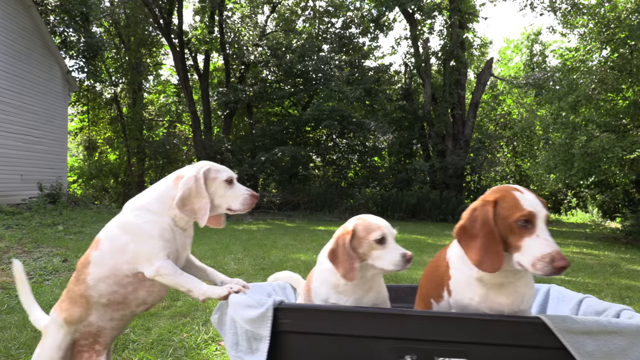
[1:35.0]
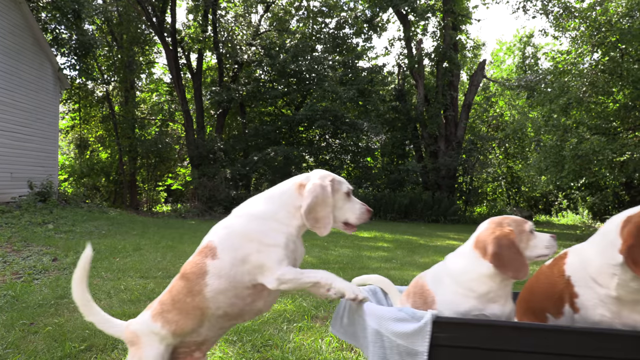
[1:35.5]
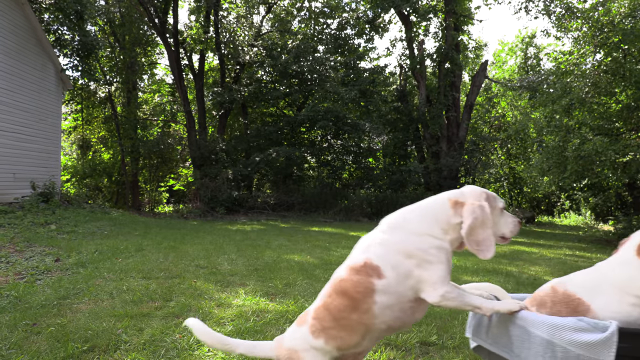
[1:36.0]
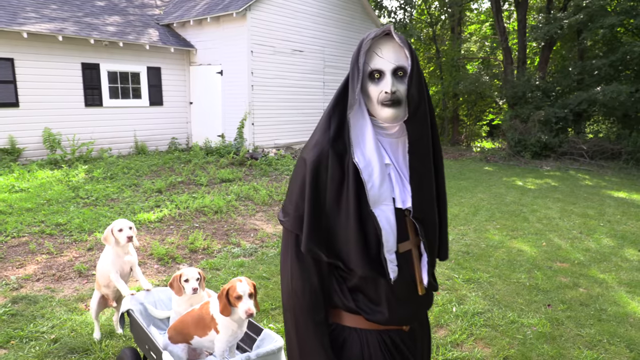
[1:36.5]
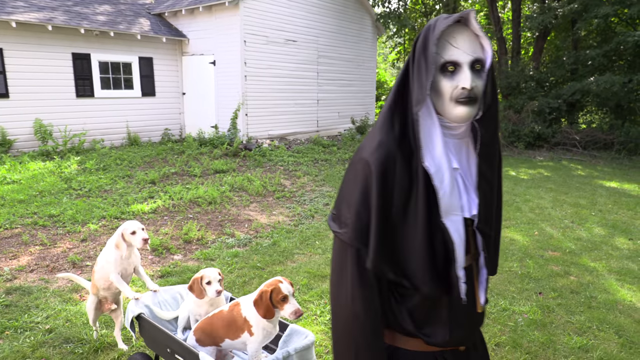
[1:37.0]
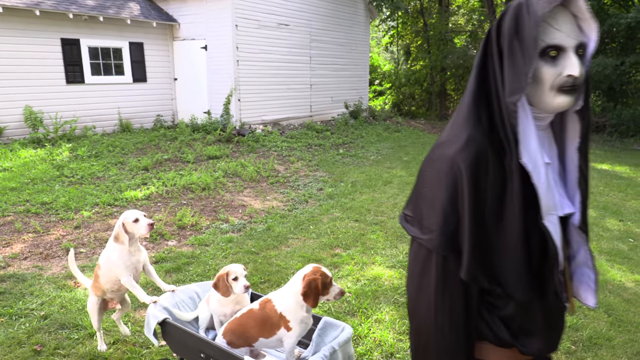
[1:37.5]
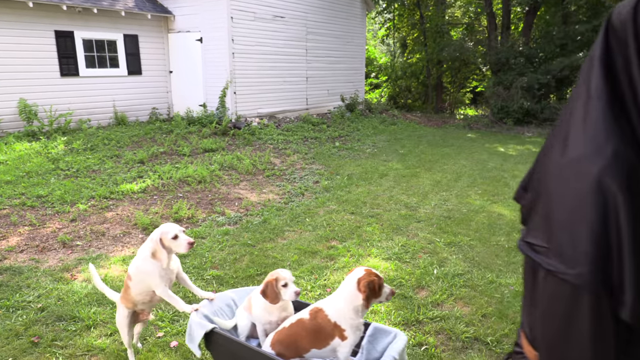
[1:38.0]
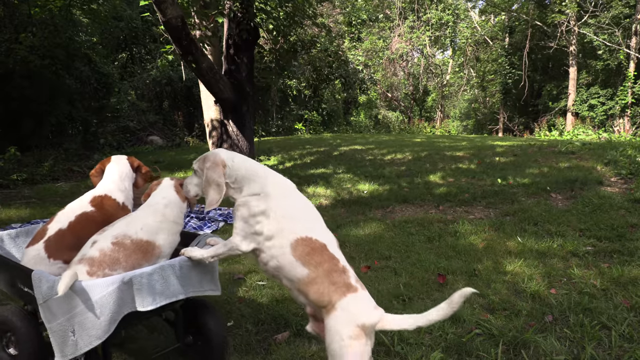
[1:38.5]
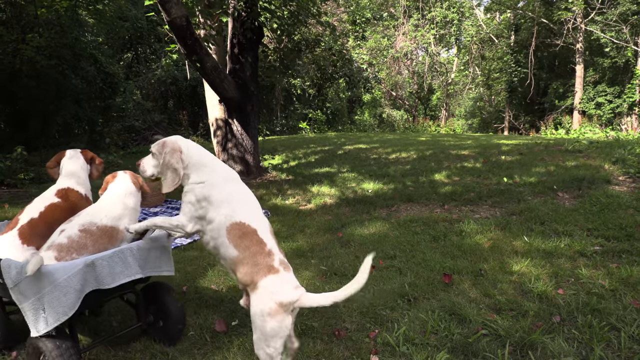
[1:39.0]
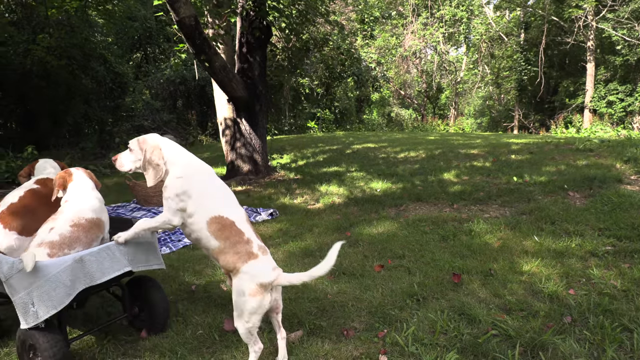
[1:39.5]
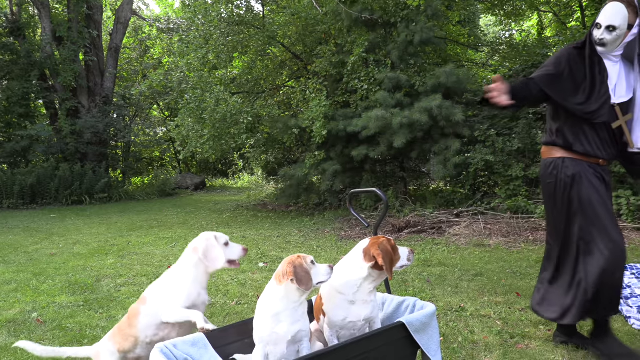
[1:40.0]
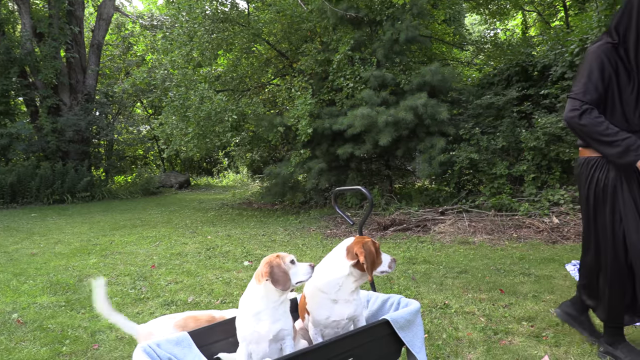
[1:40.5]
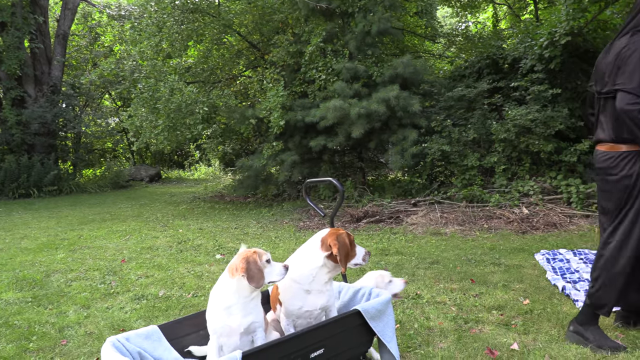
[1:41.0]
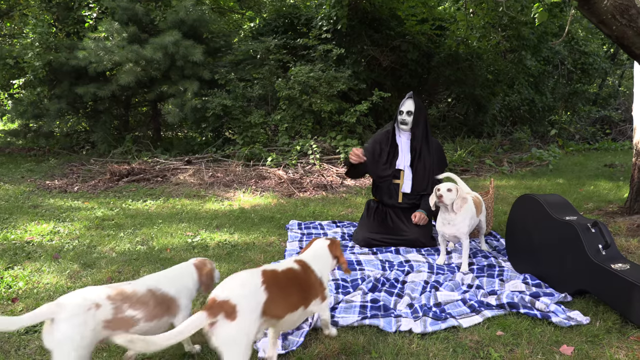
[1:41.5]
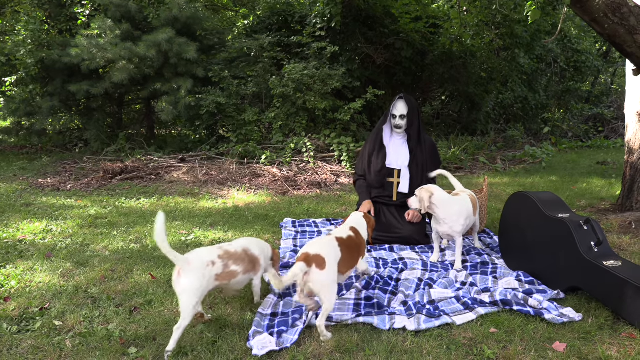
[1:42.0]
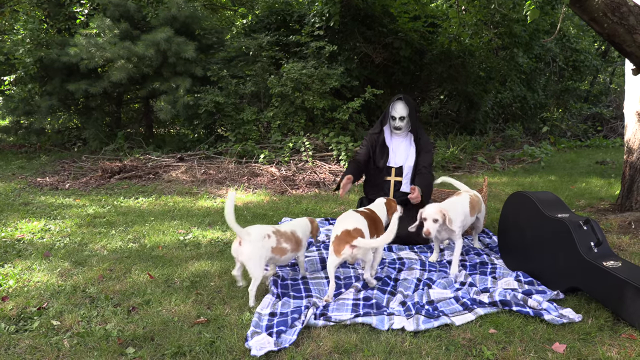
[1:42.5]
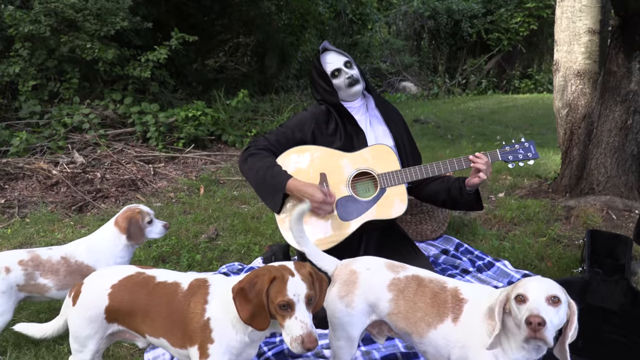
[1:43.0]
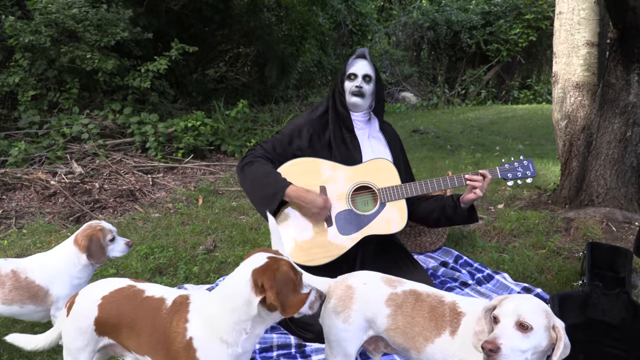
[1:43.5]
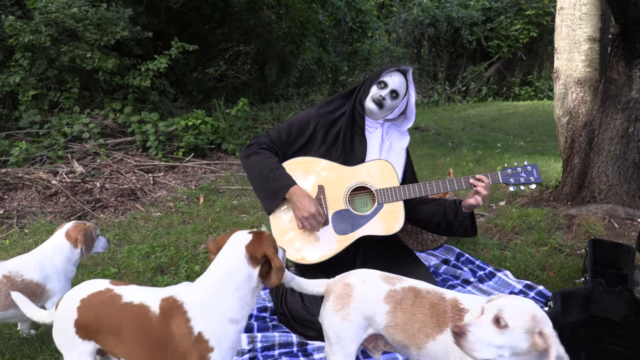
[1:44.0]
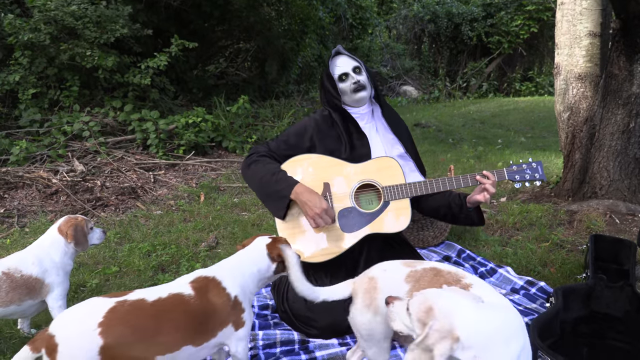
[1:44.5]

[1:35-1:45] The demon nun pulls the dogs through the backyard in the wagon and looks up at the camera. He brings them to a blue and white checkered blanket, a brown wicker basket and a black guitar case, indicating a picnic. The three dogs crawl to the demon nun and stay on the blanket, where he is also sitting, and he pulls out a light brown acoustic guitar and plays while popping his head. Everyone seems to be having a good time despite the demon nun's frightening appearance. They are outside, surrounded by many green trees, with the house in front of them.